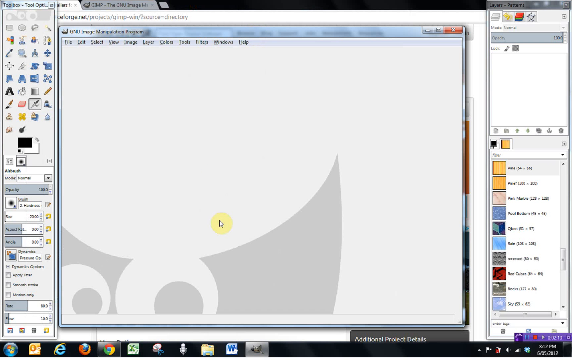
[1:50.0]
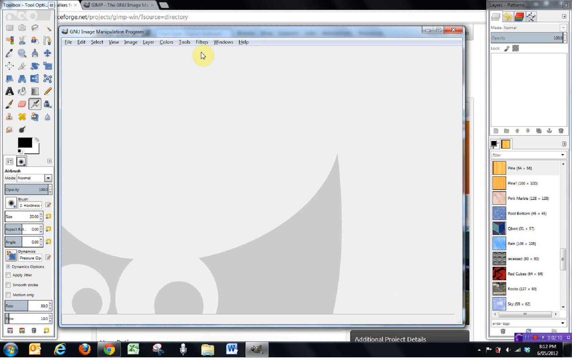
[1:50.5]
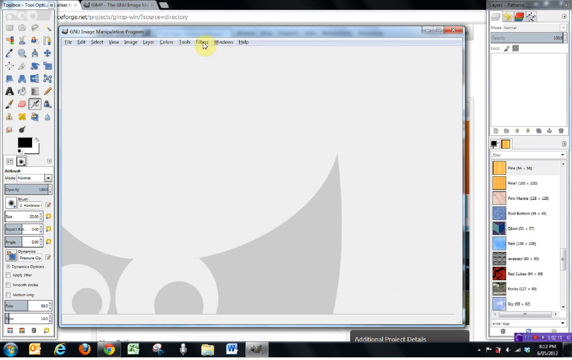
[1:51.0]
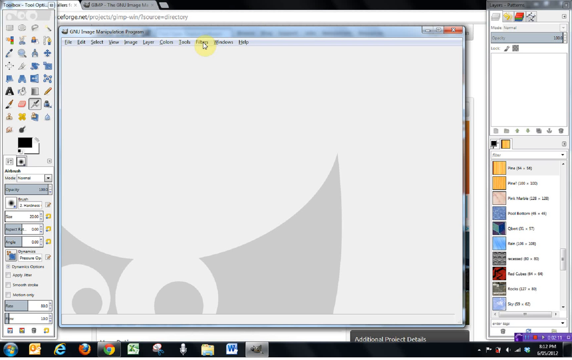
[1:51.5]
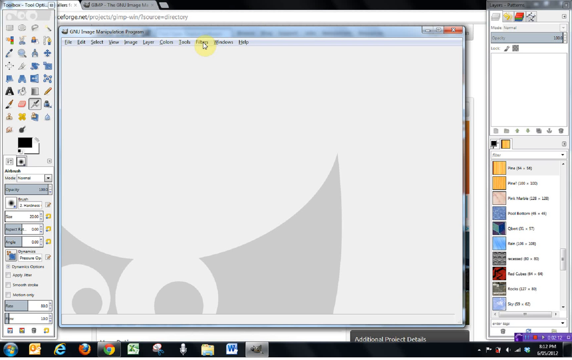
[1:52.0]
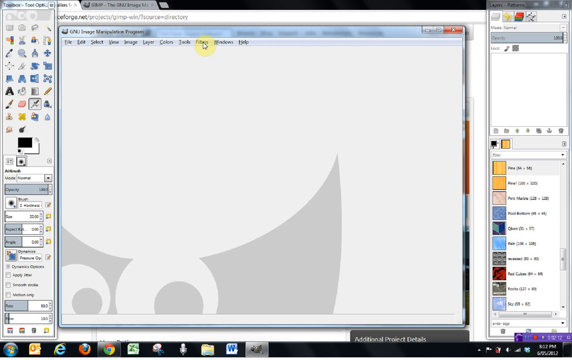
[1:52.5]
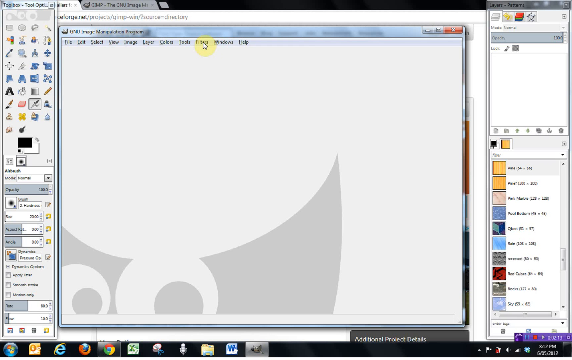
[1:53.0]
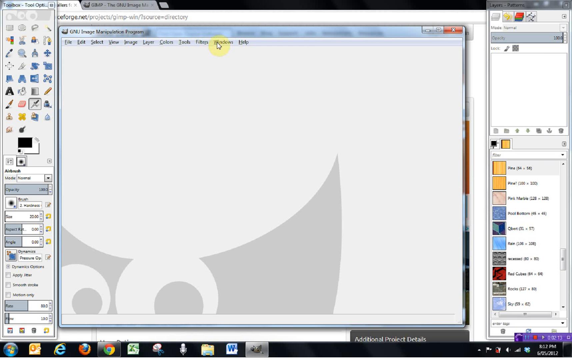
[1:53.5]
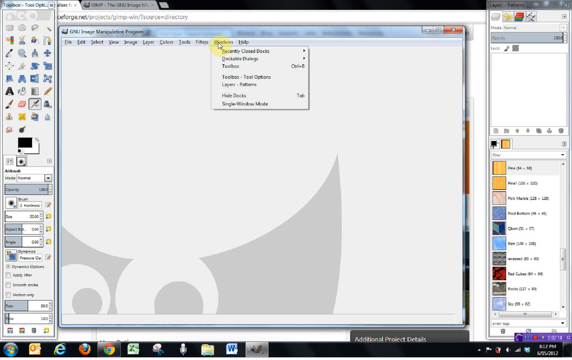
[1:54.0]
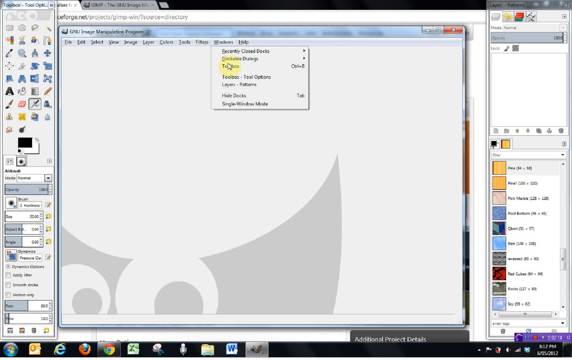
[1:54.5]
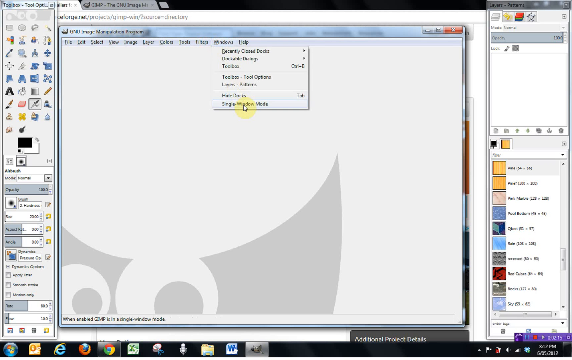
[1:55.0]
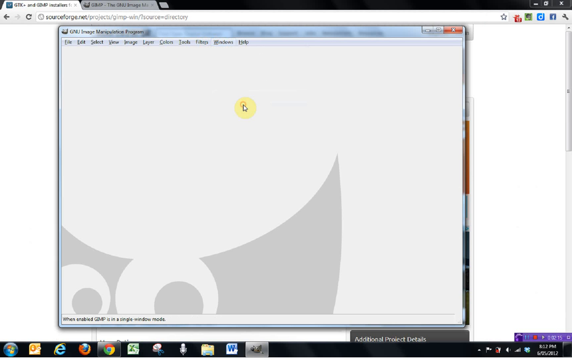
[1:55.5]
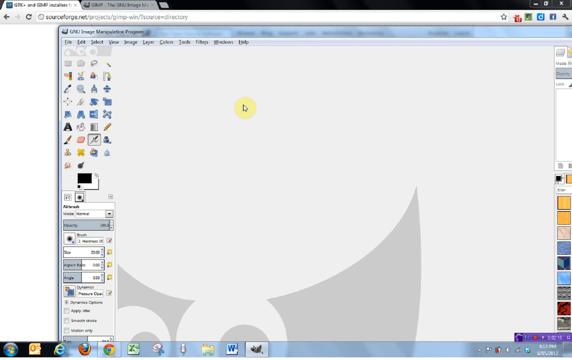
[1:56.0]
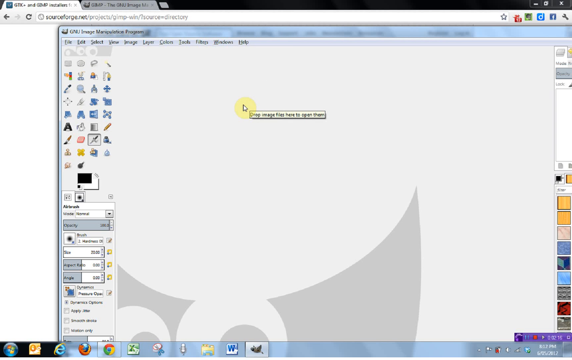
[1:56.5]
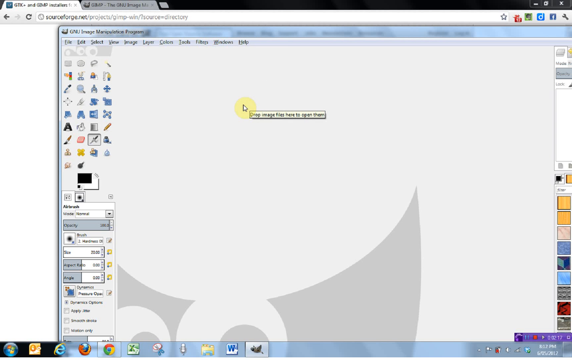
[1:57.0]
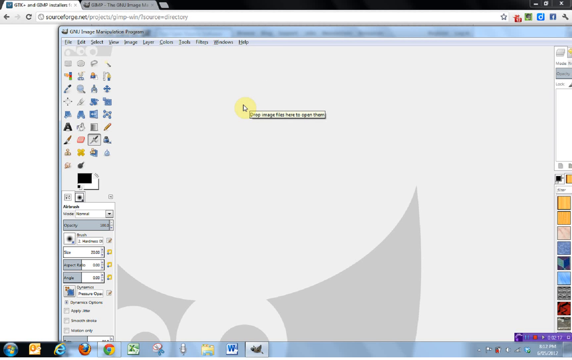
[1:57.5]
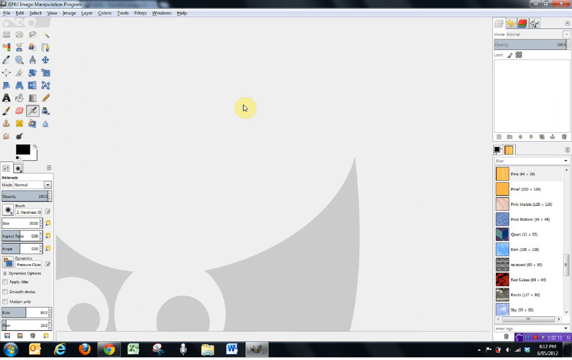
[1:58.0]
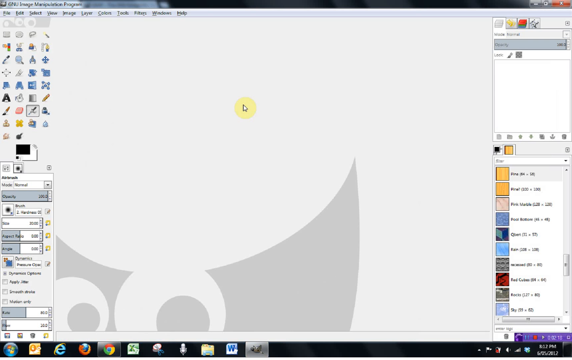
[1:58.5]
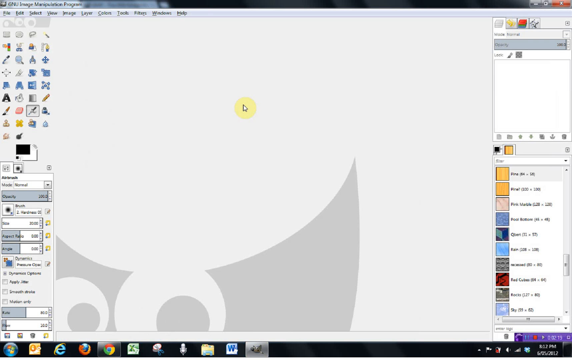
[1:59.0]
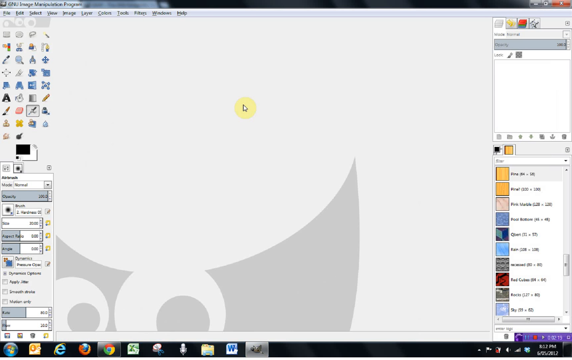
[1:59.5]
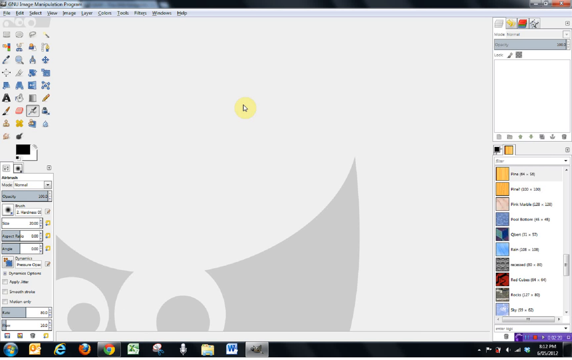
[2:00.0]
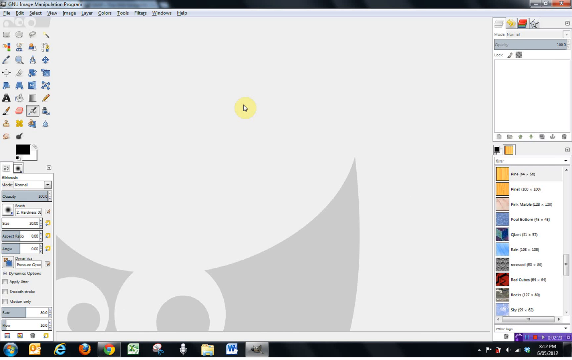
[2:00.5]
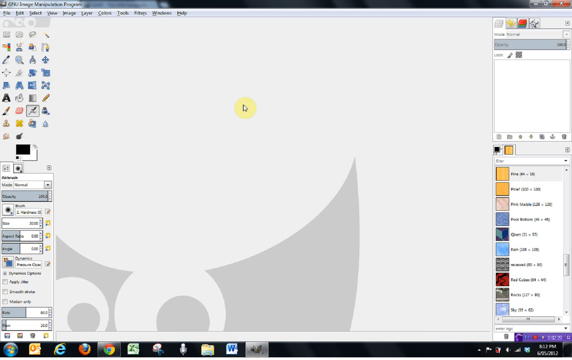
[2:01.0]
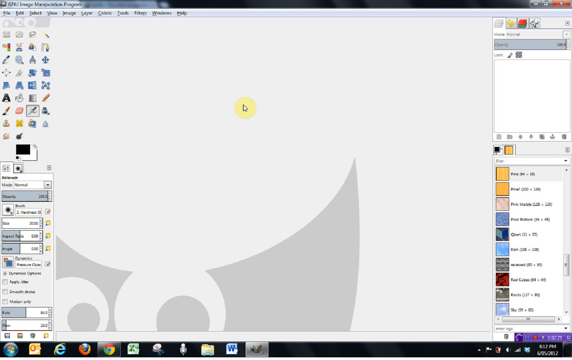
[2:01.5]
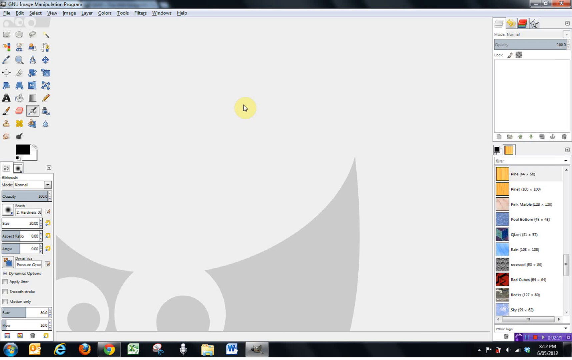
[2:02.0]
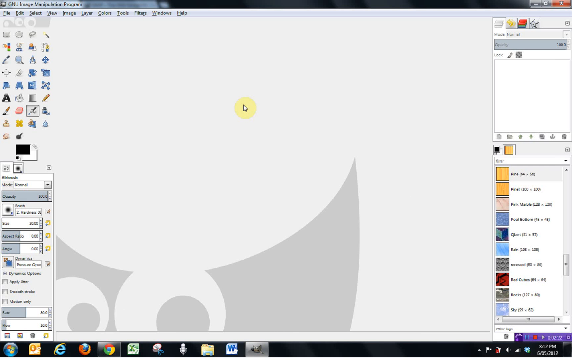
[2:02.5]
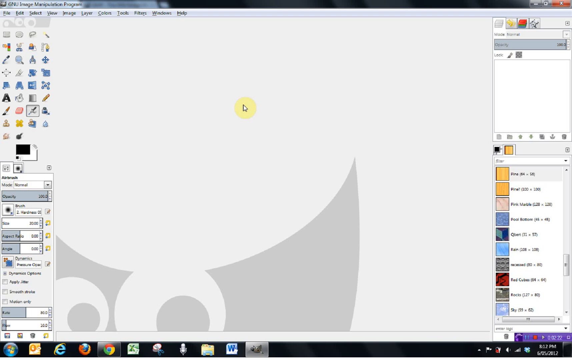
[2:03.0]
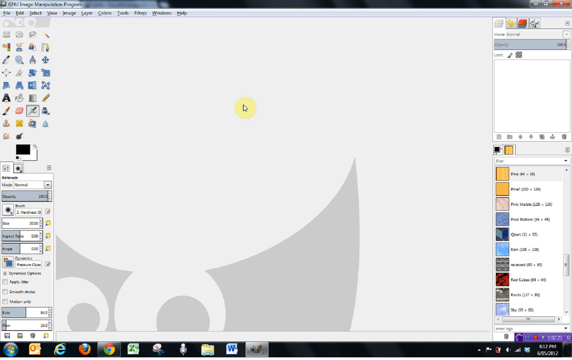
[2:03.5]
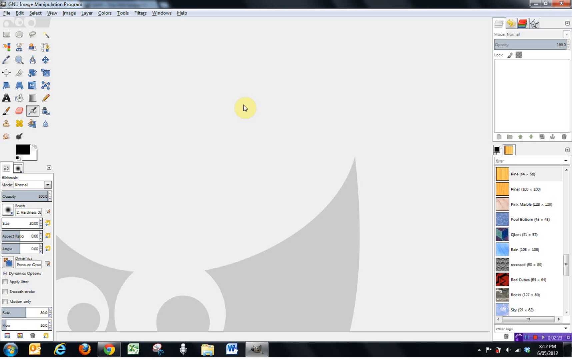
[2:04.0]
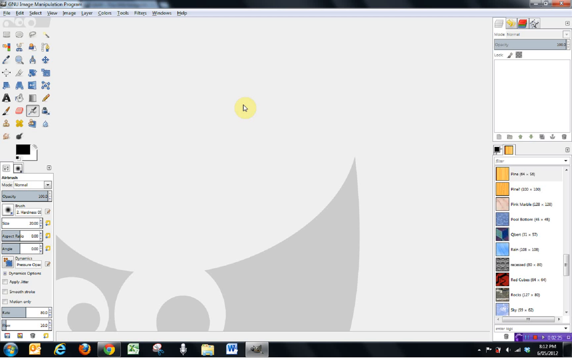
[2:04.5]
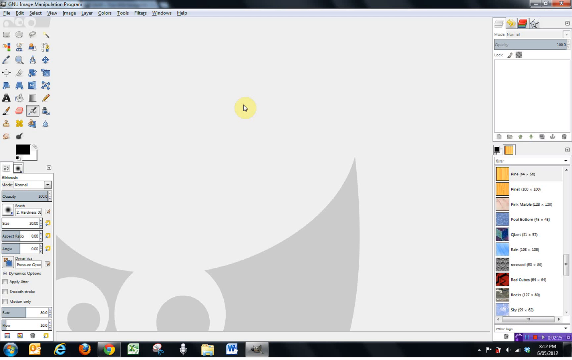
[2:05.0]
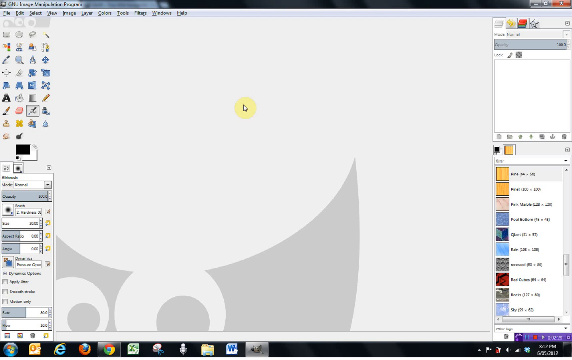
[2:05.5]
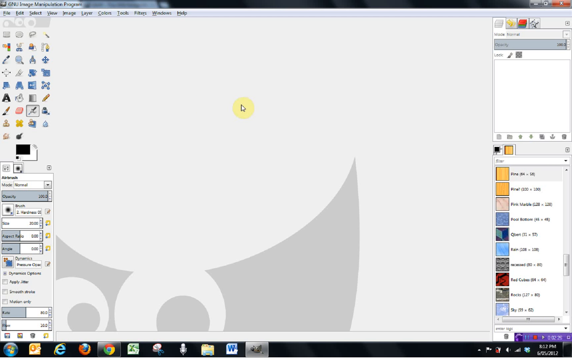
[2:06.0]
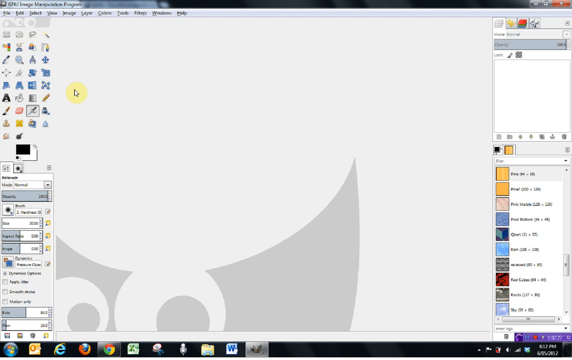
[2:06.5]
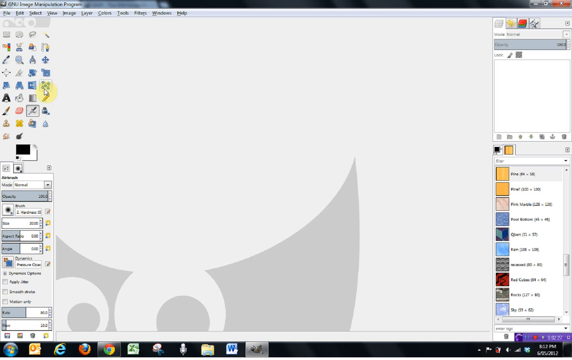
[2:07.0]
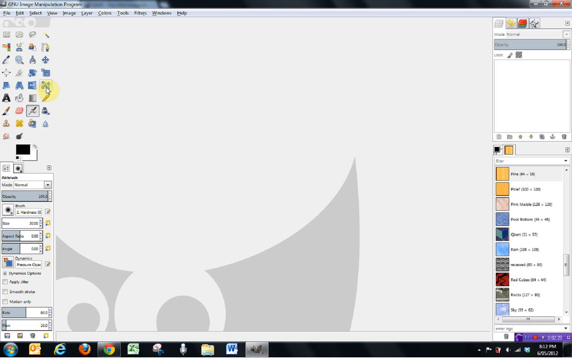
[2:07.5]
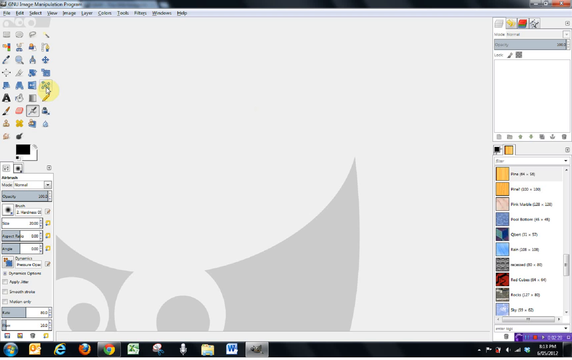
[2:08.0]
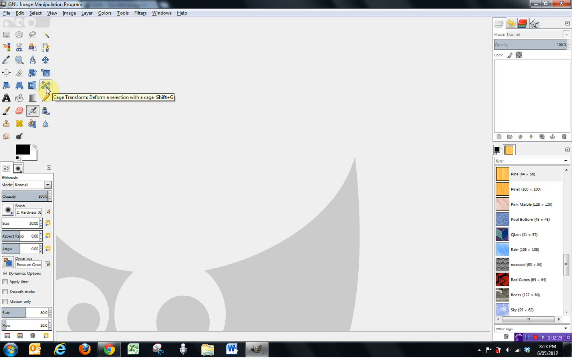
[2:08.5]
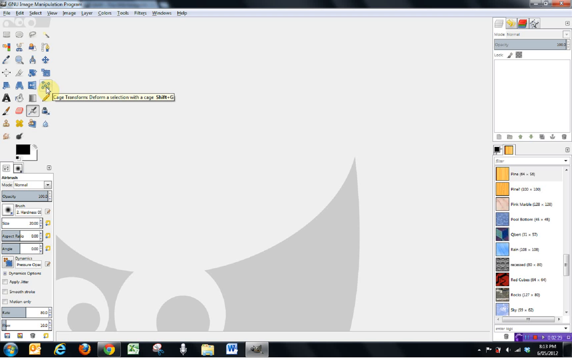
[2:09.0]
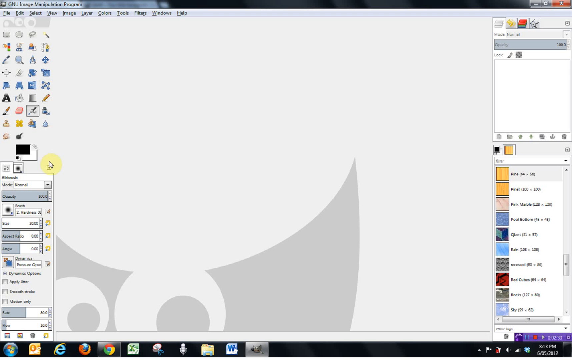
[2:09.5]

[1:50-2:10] Continuing from the same screen, the cursor goes up to what looks like the Filters menu, then to the Windows menu again and down to single window mode. The screen changes and appears to take up the whole full screen. The cursor then goes to the toolbar and selects an icon that seems to be something about a cage: a small blue icon with four little nodes and something in the middle. After it is clicked, the window changes slightly, and the cursor goes down and clicks a button at the bottom.